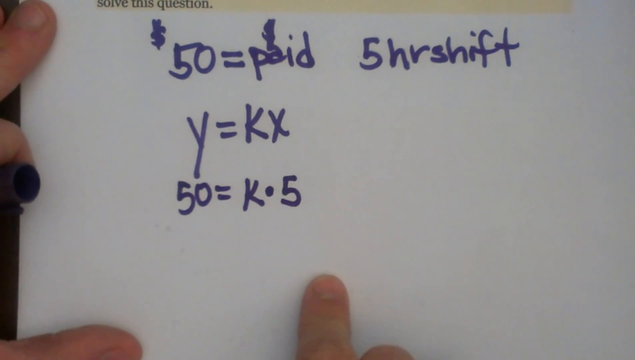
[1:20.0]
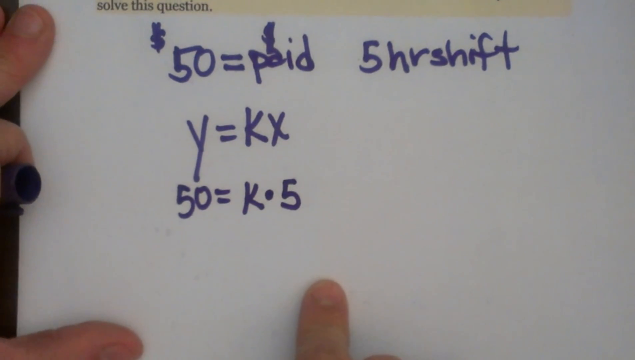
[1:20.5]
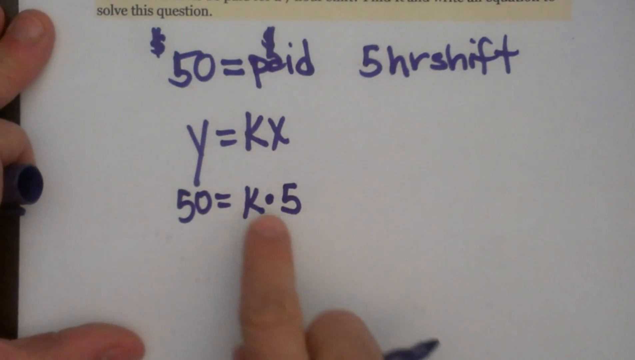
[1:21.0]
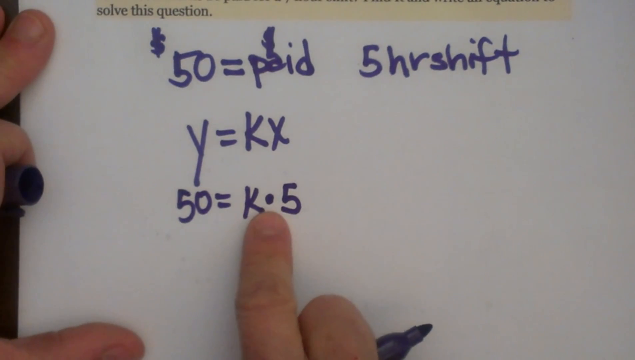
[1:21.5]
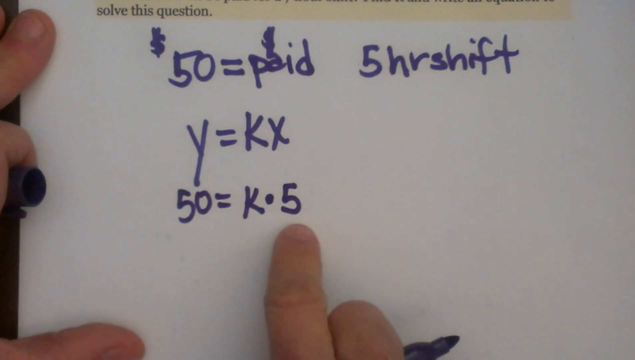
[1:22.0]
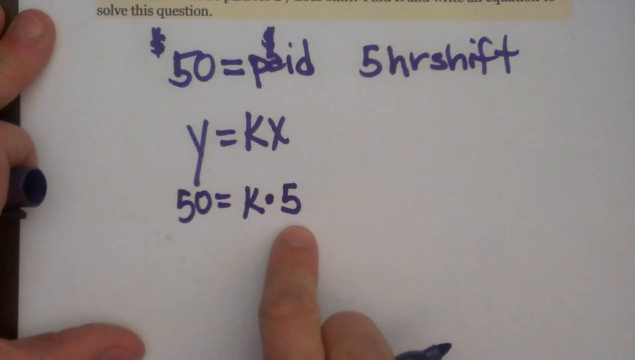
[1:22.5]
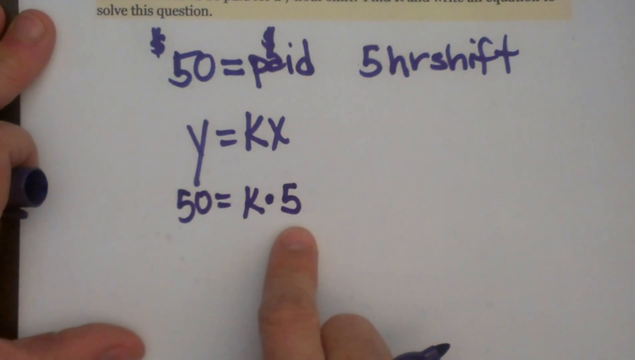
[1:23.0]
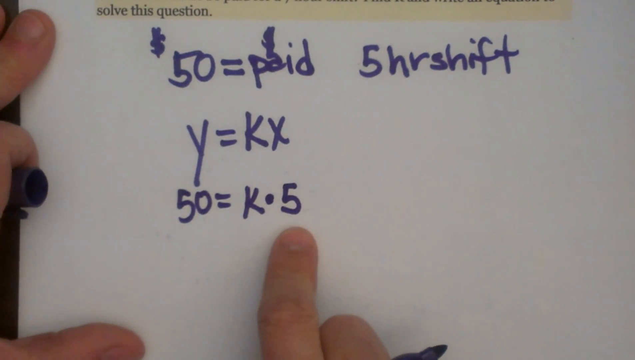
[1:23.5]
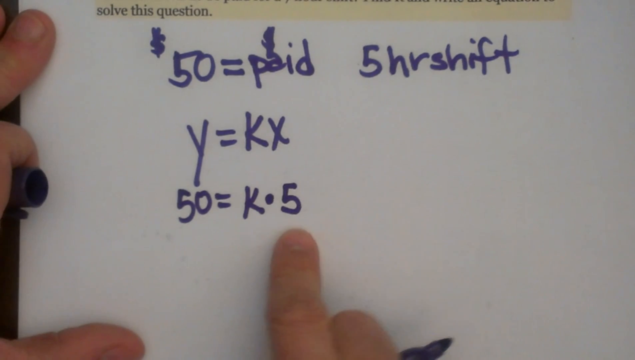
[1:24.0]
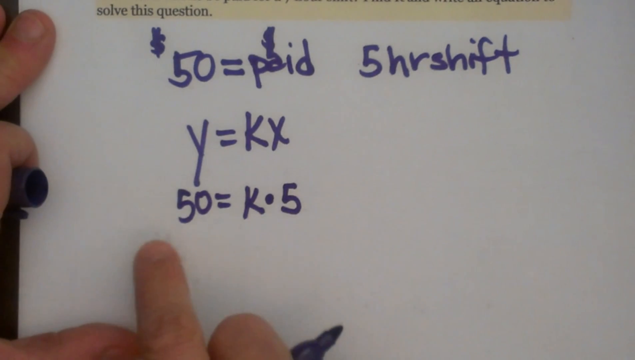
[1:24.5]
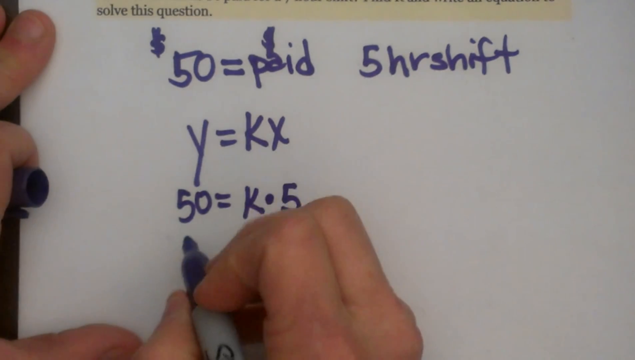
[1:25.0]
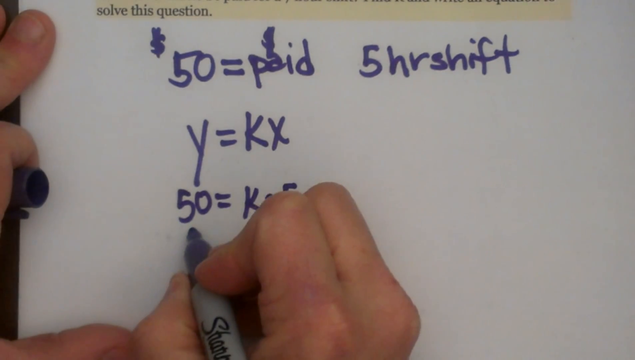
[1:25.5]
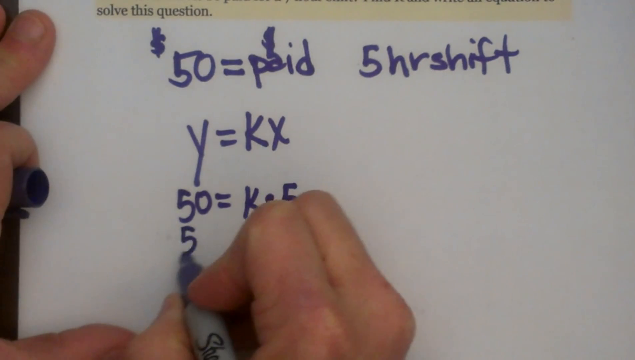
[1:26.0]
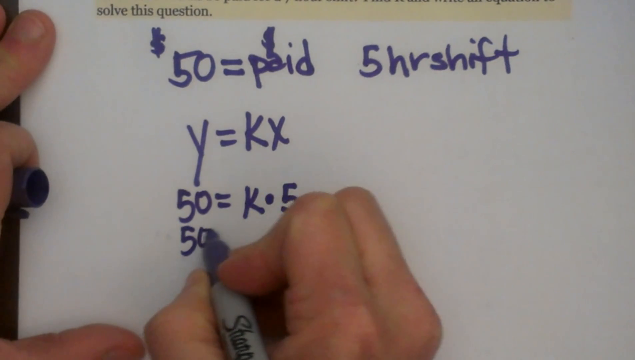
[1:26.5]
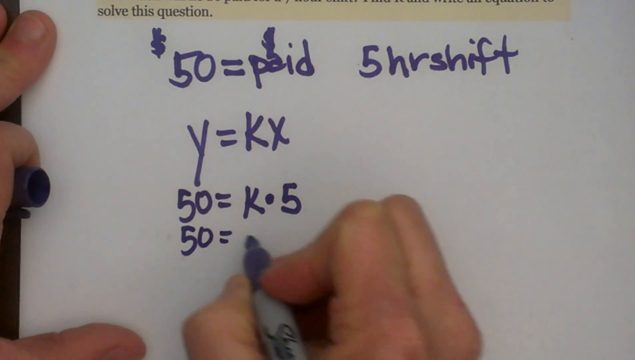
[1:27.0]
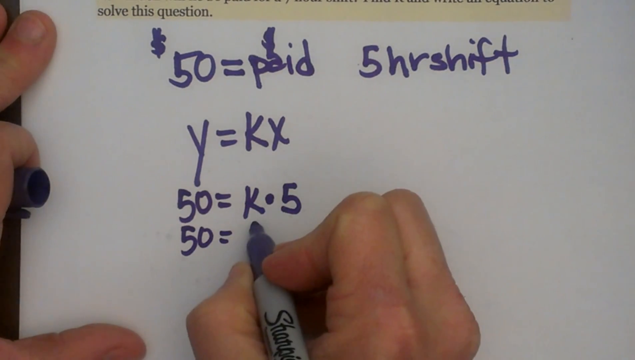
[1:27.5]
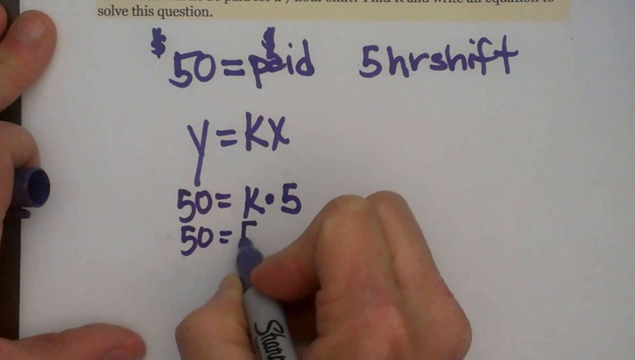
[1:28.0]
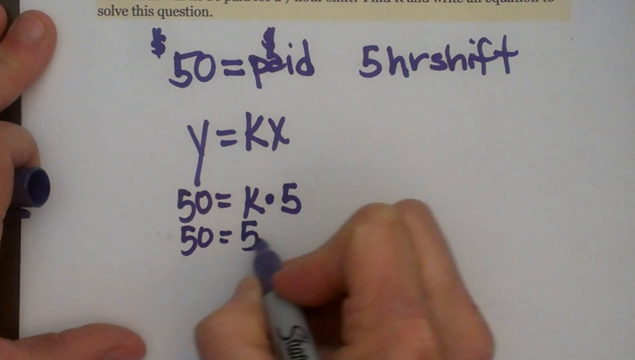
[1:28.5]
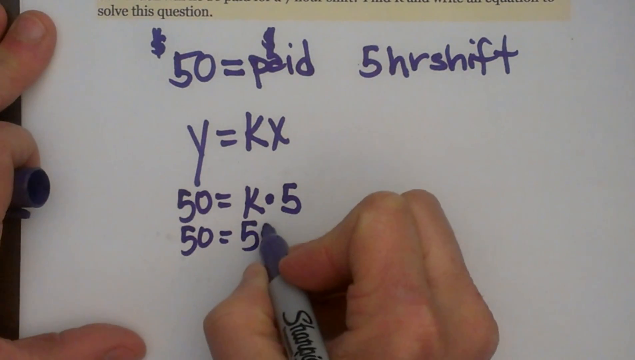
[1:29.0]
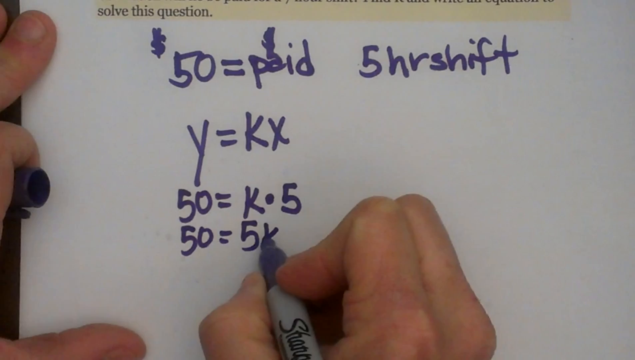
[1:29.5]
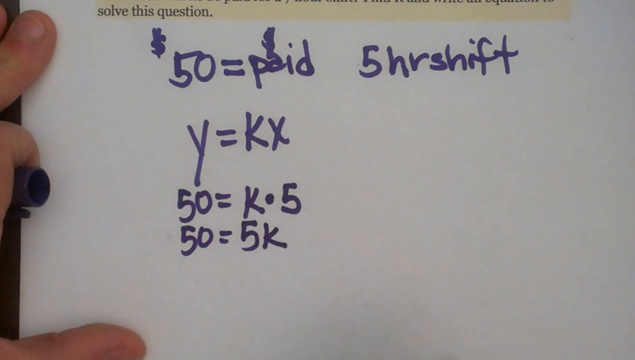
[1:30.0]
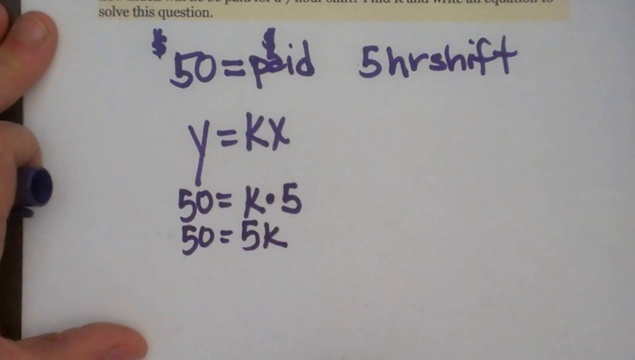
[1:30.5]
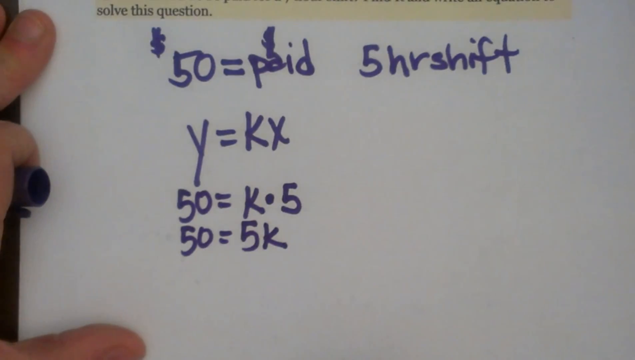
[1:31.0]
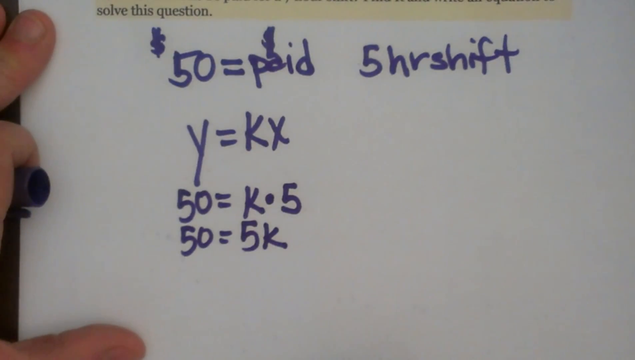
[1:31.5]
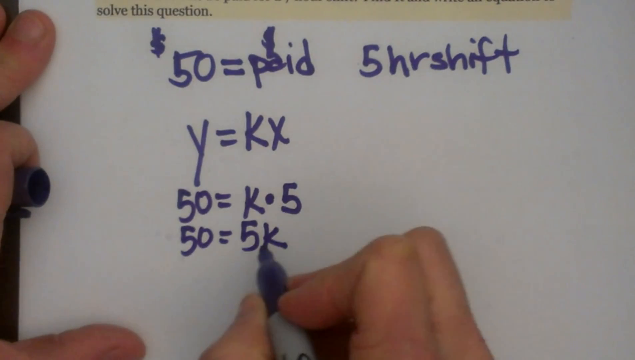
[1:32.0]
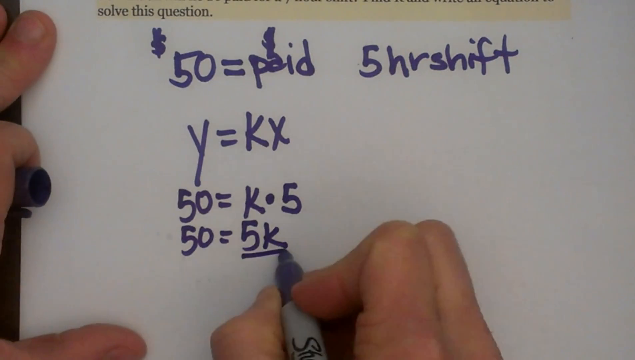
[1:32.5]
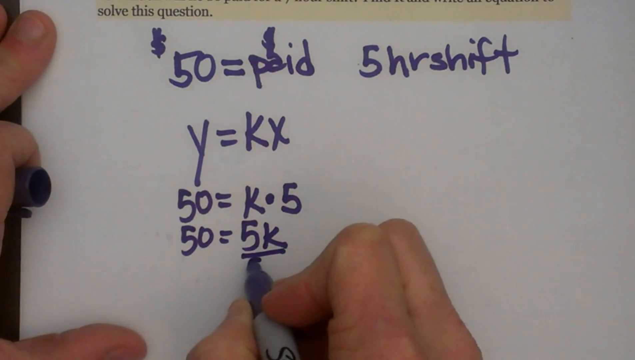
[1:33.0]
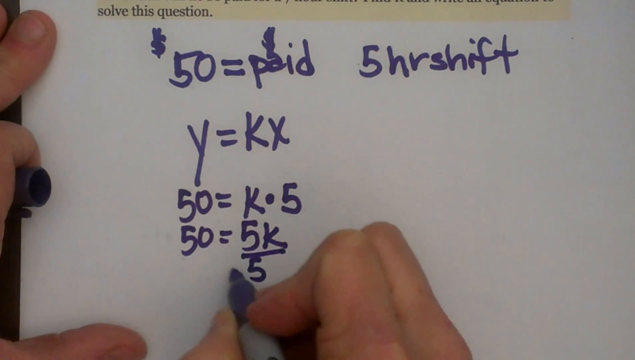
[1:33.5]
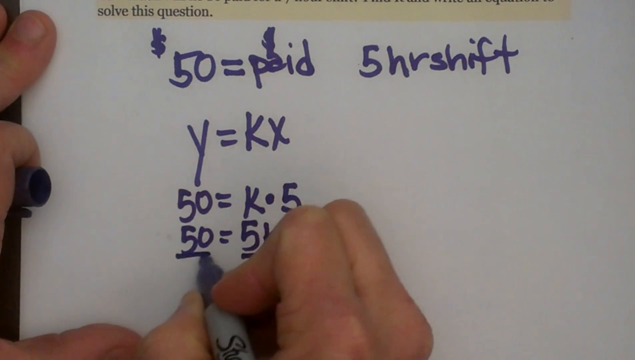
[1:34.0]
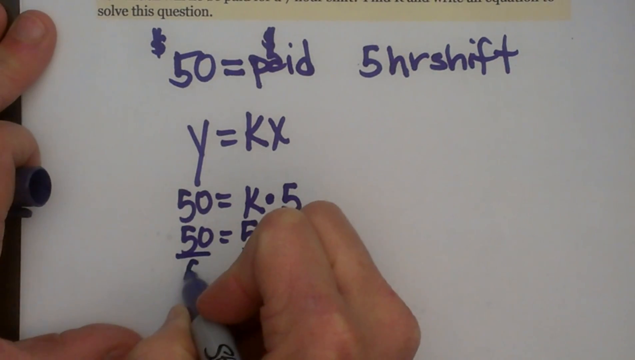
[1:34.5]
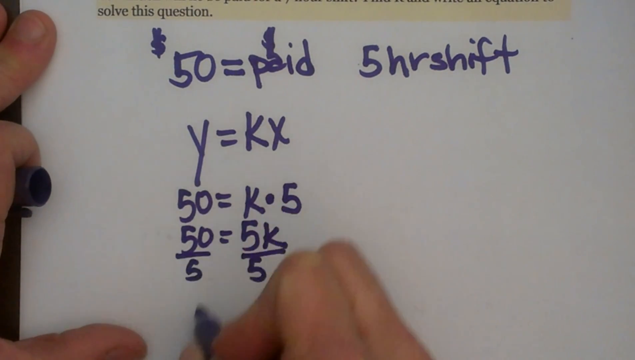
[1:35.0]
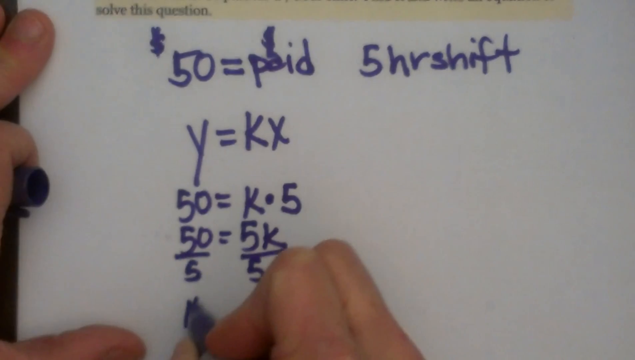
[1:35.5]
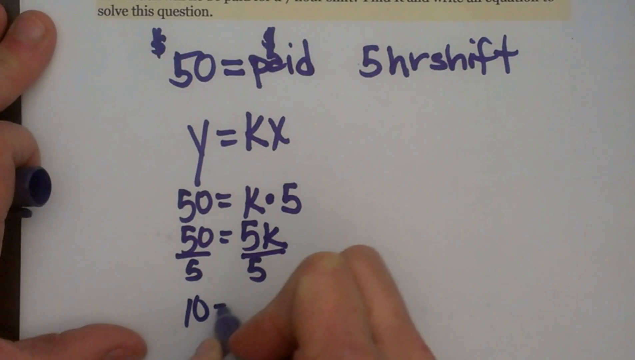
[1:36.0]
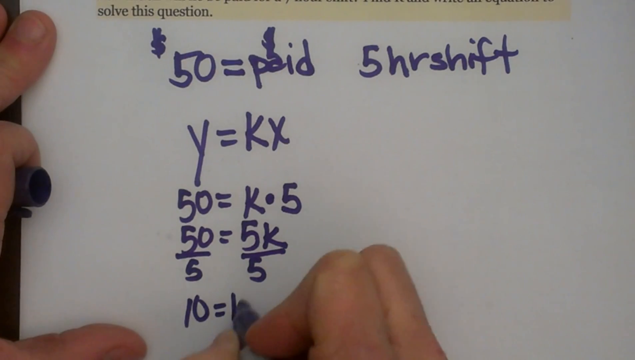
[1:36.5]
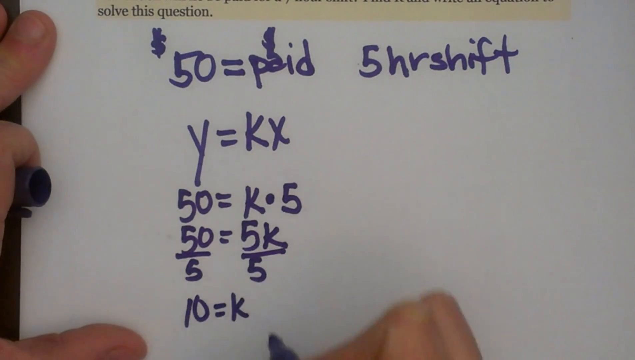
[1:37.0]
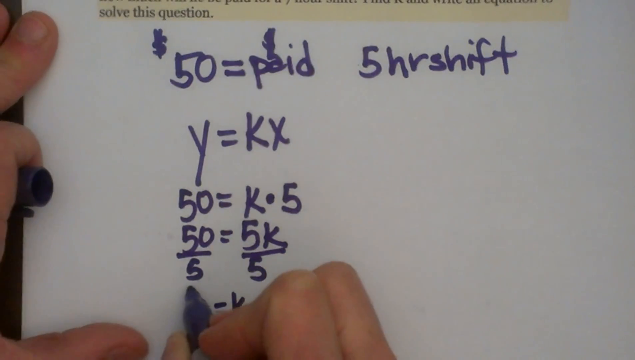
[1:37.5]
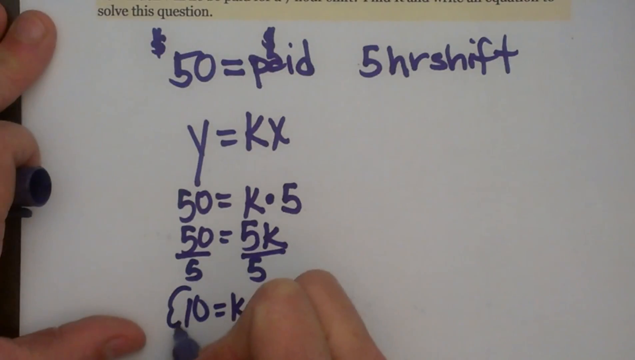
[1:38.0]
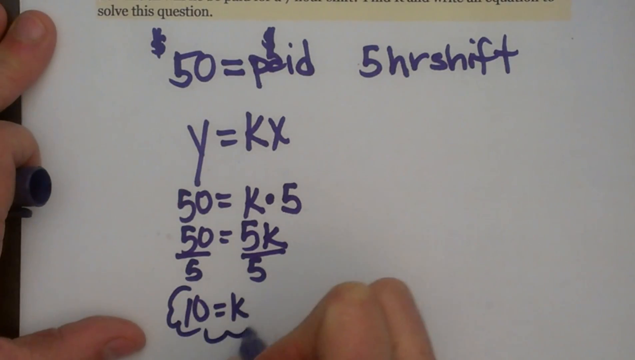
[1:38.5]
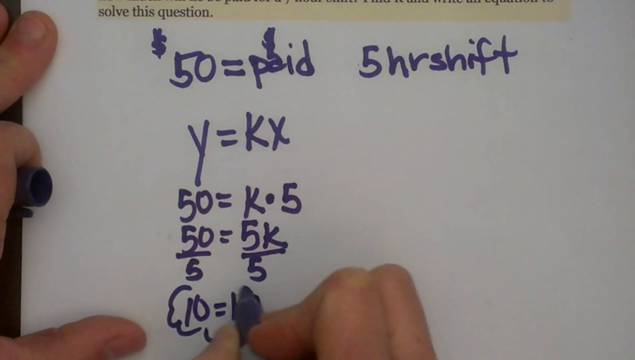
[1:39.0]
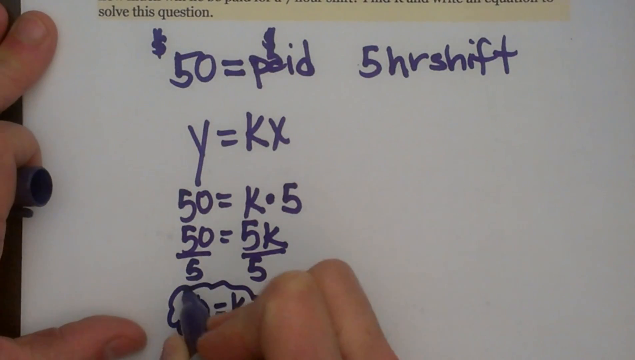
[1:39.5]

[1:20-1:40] Equations are handwritten in magic marker on a white pad: "$50 = paid" and "five hours shift", with "Y = KX" and "50 = K.5" underneath. The person then writes "50 = 5K", underlines the 5K and puts a five under it, and underlines the 50 and puts a five under it. Next they write "10 = K" and circle it, not with a smooth circle but with a shape almost like a cloud, with little bumps all the way around. The left hand holds onto the paper, with the top of the marker in the left index finger. Only a portion of the paragraph is visible now, the words "solve this question", with yellow highlighting on them.